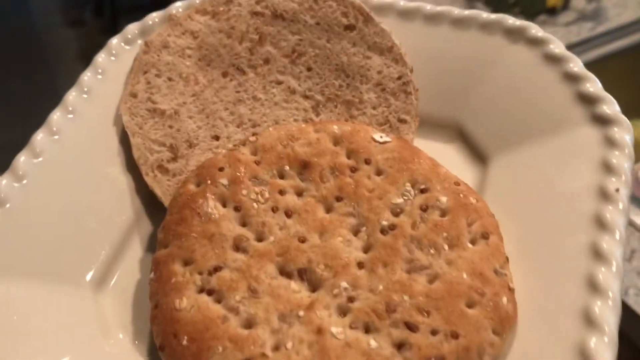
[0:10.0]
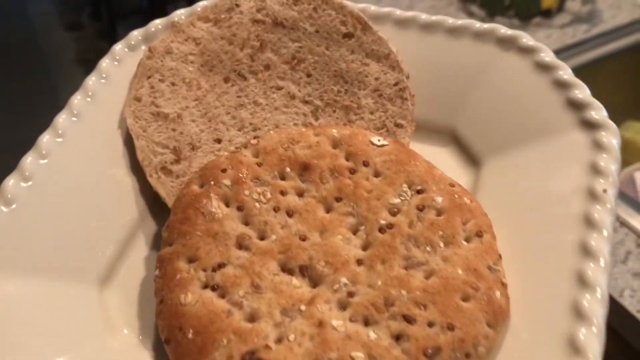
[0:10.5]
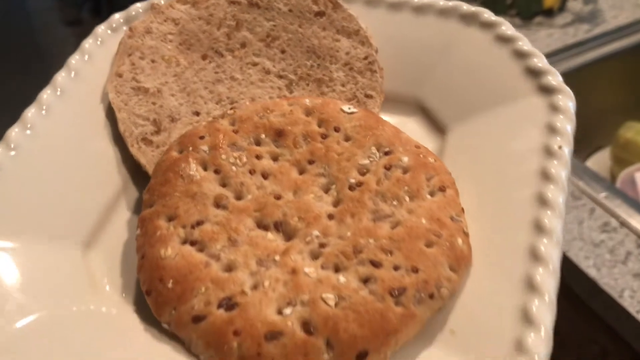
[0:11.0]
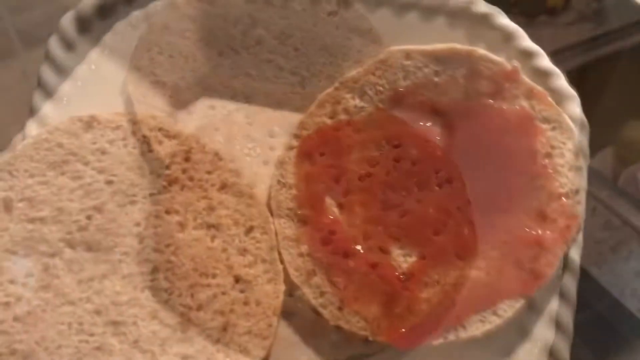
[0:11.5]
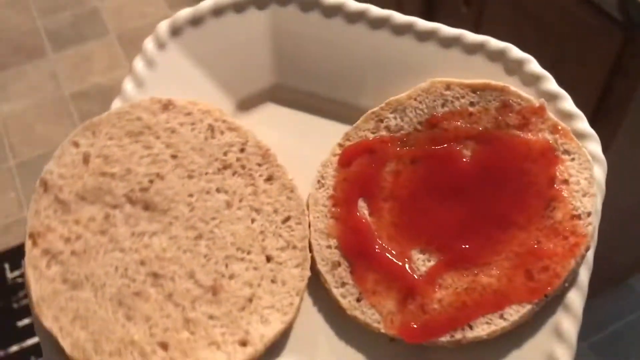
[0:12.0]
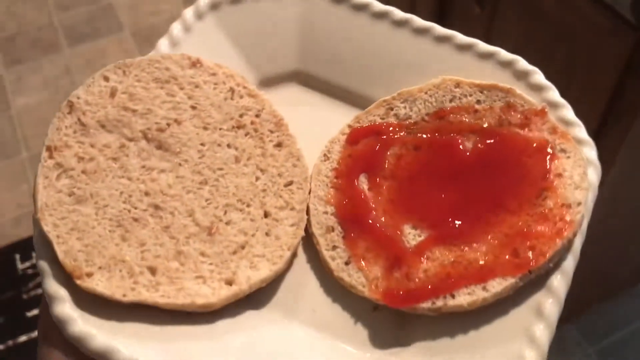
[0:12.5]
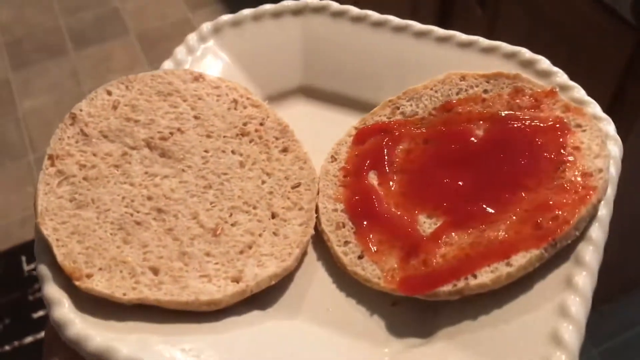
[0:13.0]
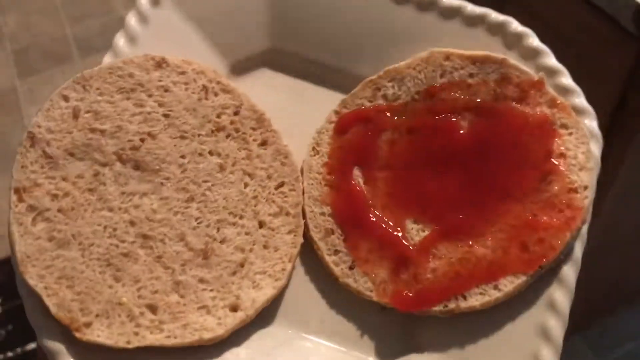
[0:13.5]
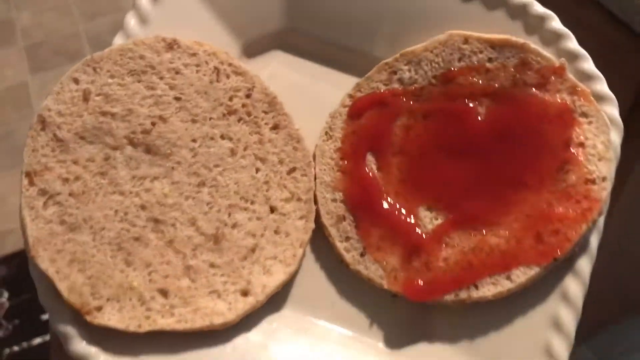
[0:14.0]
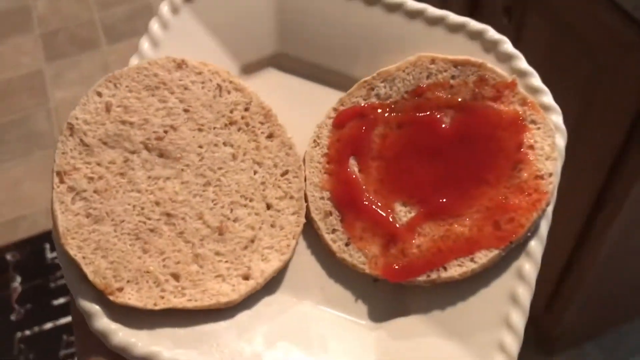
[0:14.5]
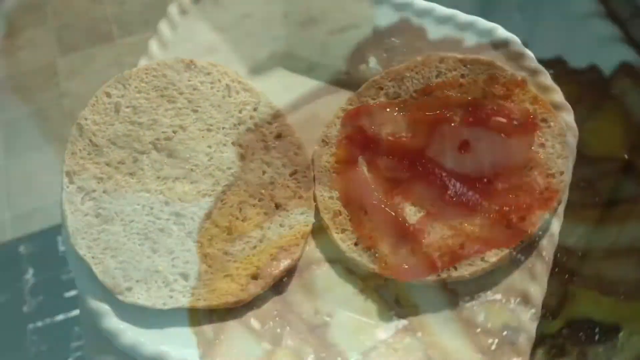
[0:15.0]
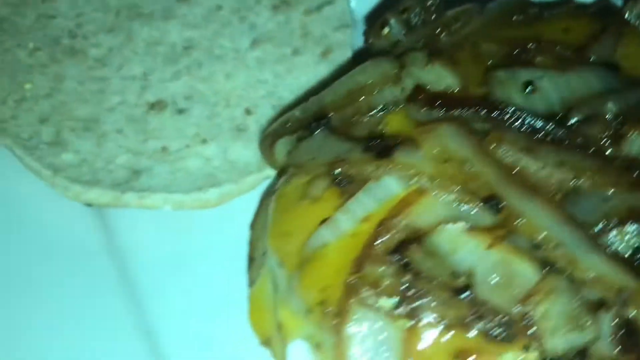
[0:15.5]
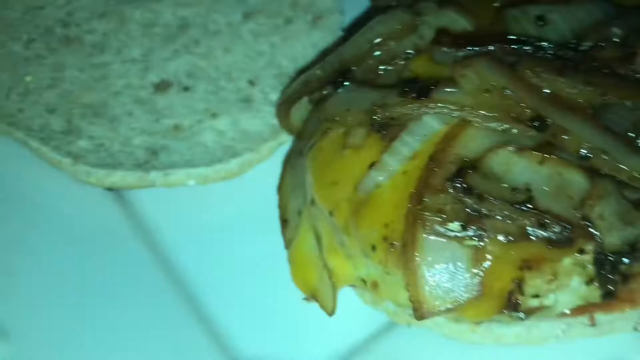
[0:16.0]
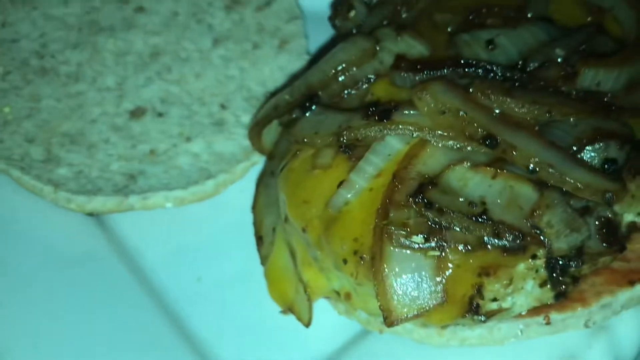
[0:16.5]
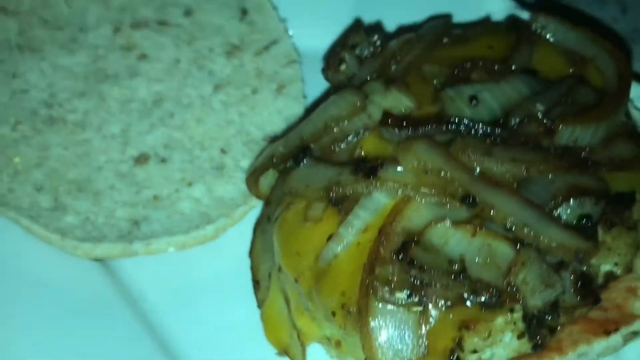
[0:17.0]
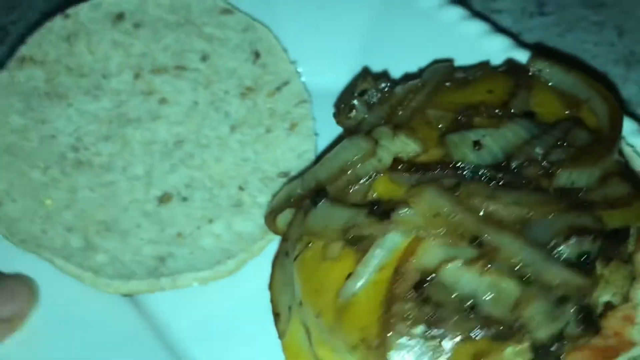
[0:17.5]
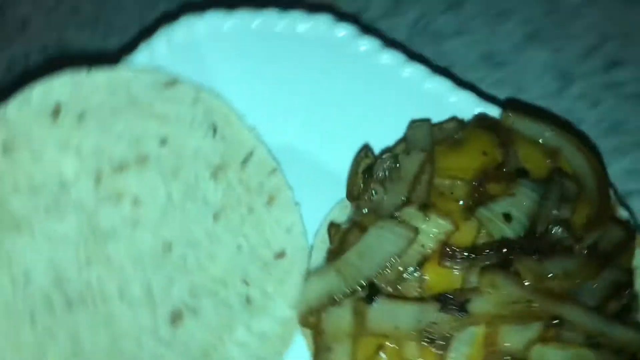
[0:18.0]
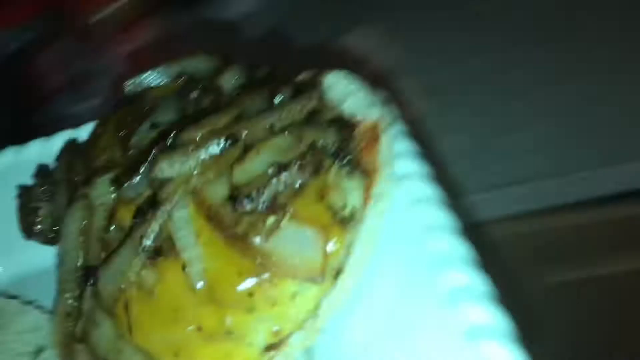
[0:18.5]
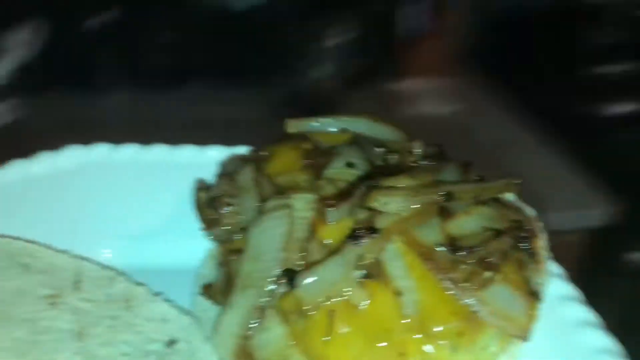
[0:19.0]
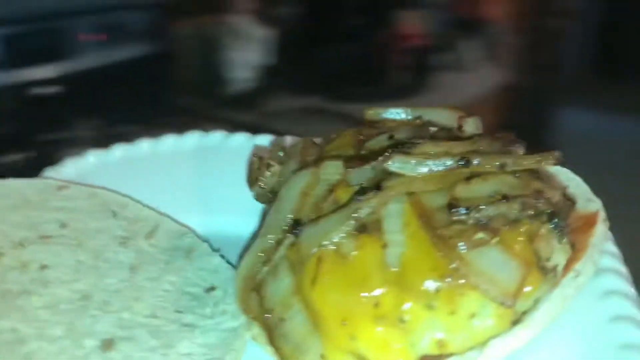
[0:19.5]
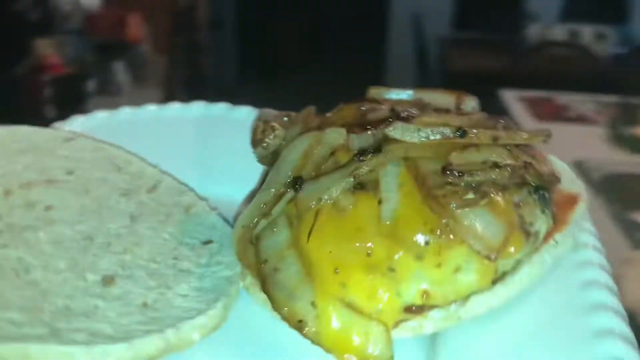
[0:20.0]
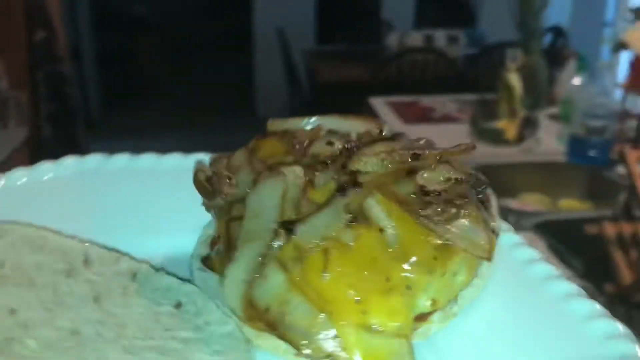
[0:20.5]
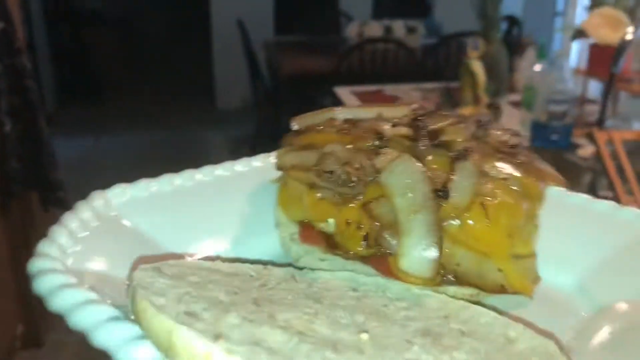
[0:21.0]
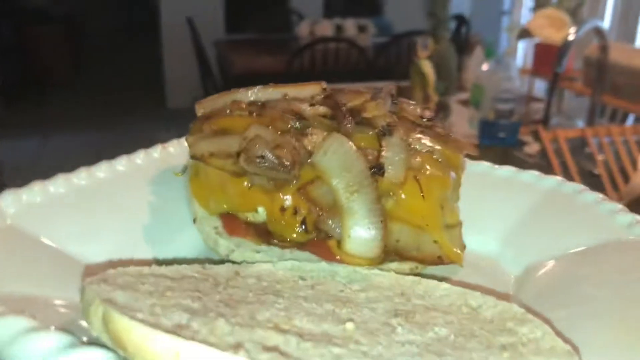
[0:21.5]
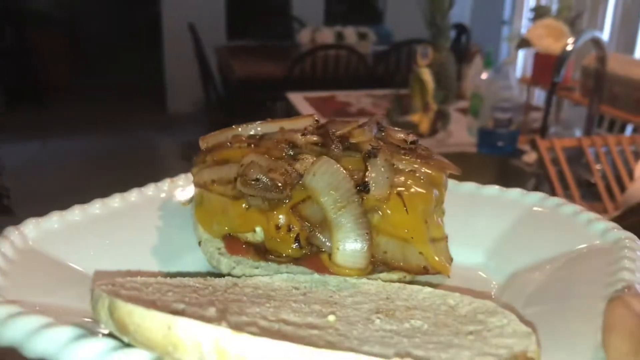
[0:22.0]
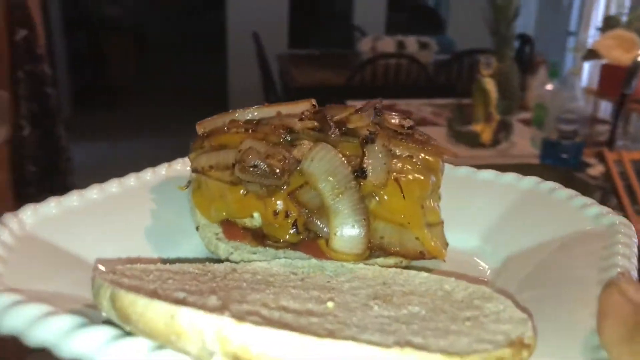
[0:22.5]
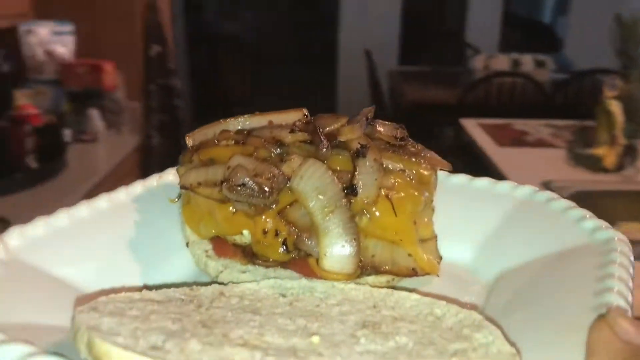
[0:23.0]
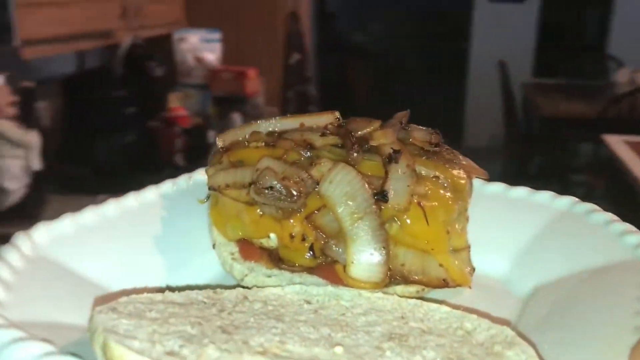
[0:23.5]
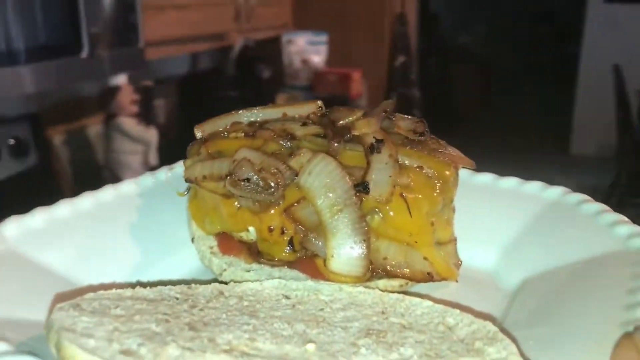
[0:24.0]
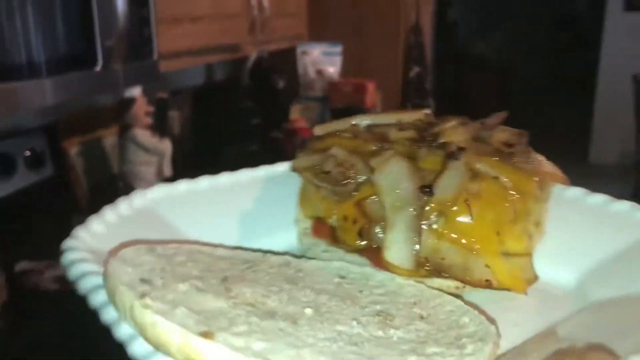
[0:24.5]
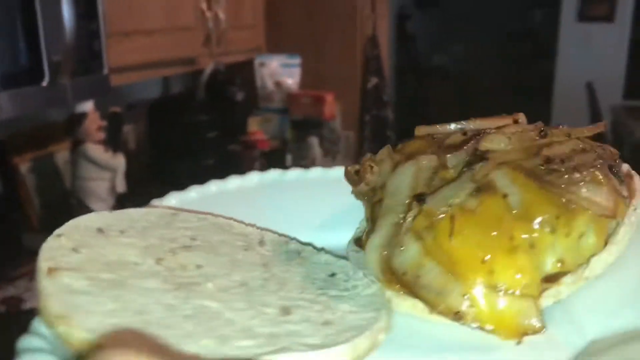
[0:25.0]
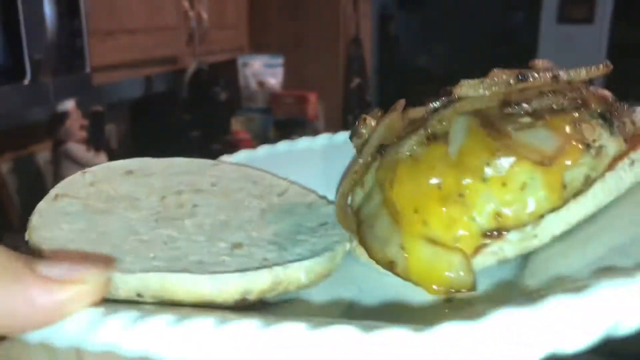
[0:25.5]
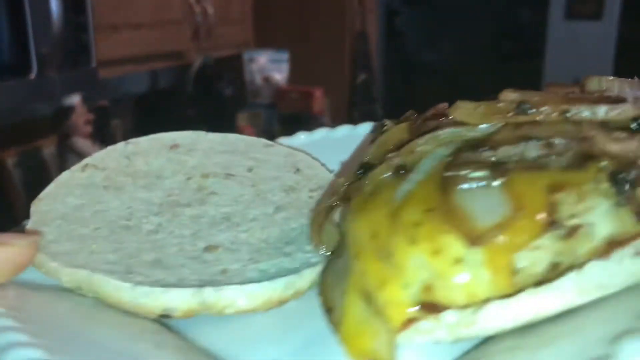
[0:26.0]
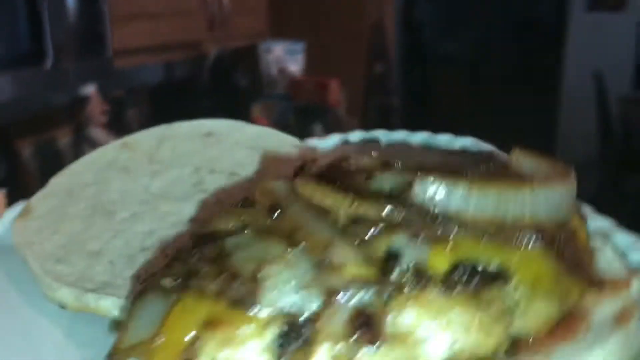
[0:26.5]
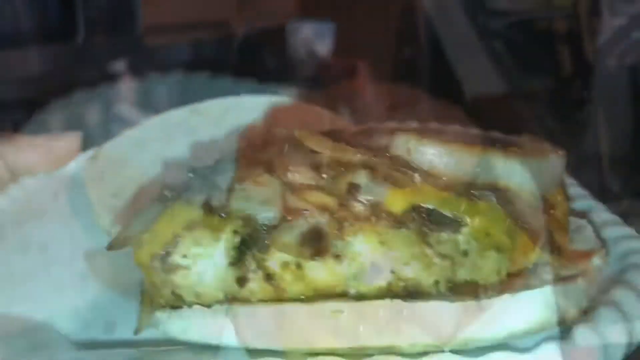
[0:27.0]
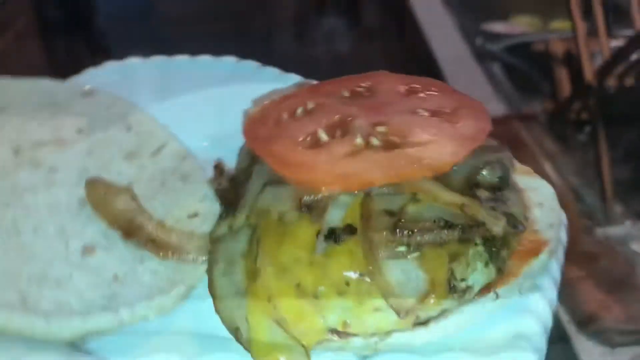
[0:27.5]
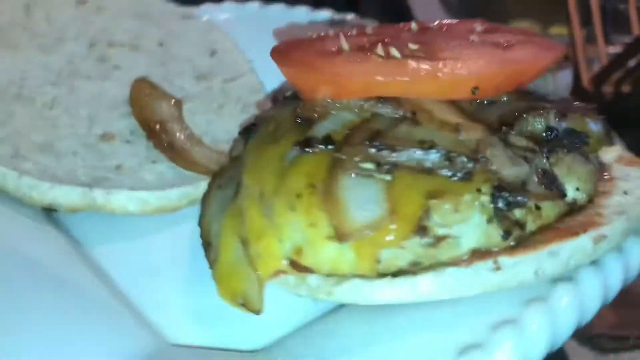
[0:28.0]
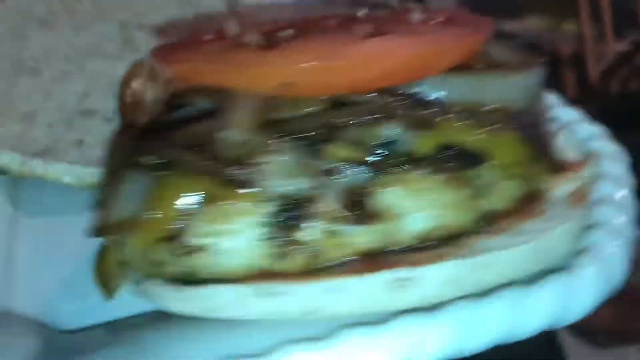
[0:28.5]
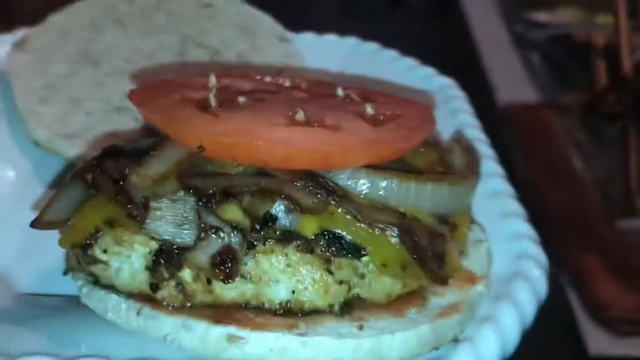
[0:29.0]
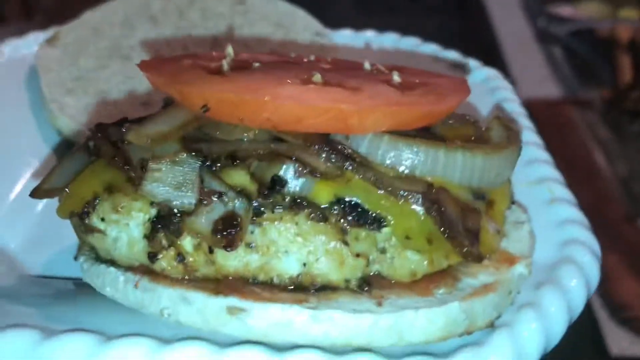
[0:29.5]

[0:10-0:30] Two sandwich tins are on a plate, and the shot quickly transitions to the same two sandwich tins flipped upside down to show their insides, with what looks like ketchup spread on one of them. Another shot follows of what looks to be a cooked patty, maybe ground beef, on one of the sandwich tins. There is also something yellow that looks melted and cooked, possibly melted cheese or maybe egg, and onions sautéed down until translucent are on top of the patty. The person holding the plate with the sandwich is kind of moving around, so the camera kind of spins around too, giving different angles of the patty on the sandwich tin. Eventually the video transitions to a shot of what looks to be a thick sliced tomato on top of the sautéed onions.